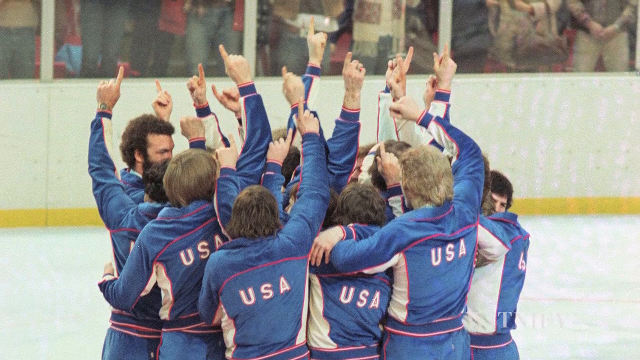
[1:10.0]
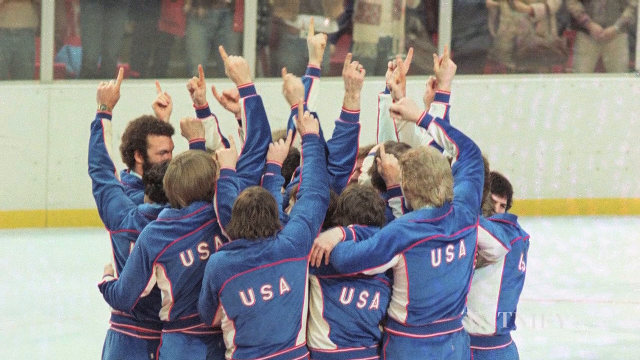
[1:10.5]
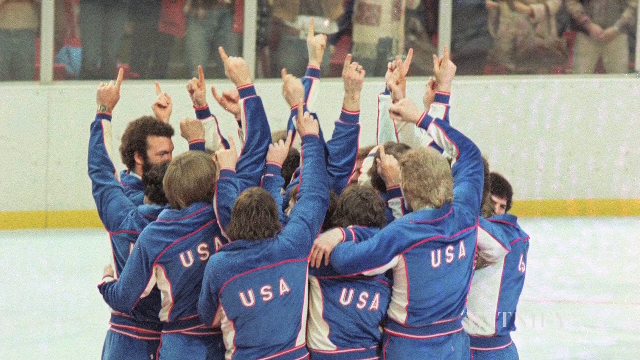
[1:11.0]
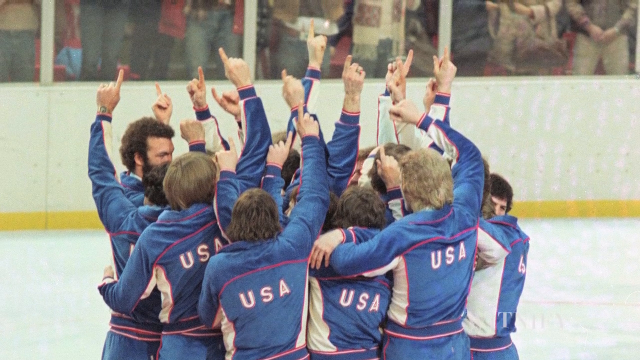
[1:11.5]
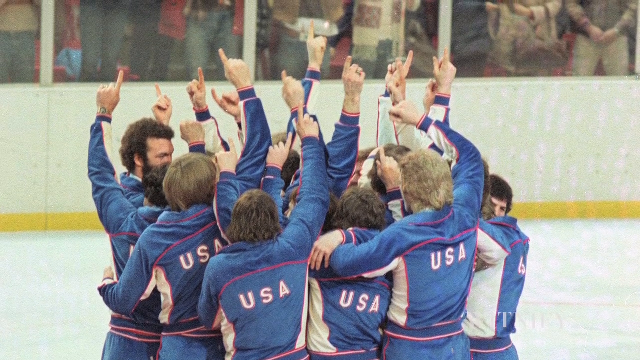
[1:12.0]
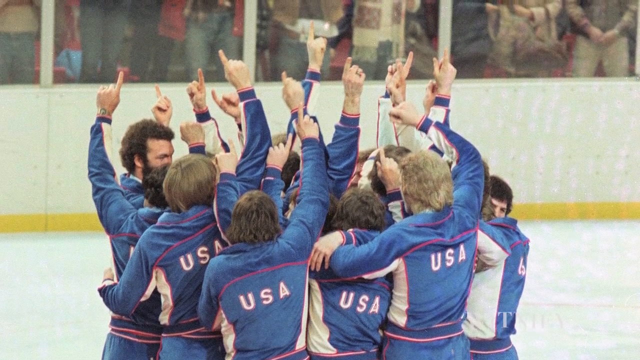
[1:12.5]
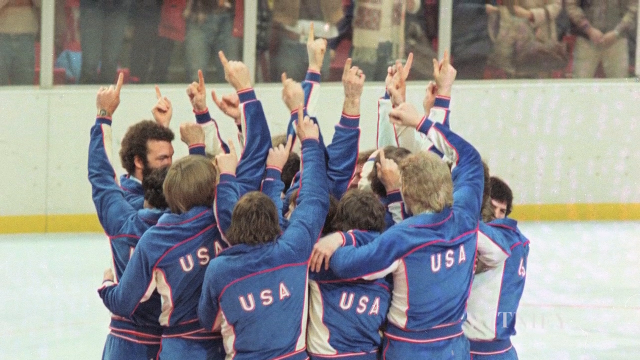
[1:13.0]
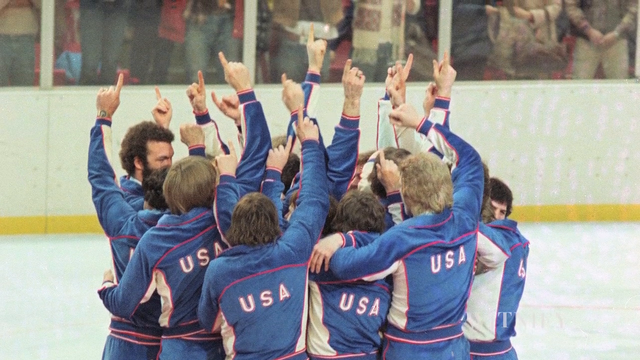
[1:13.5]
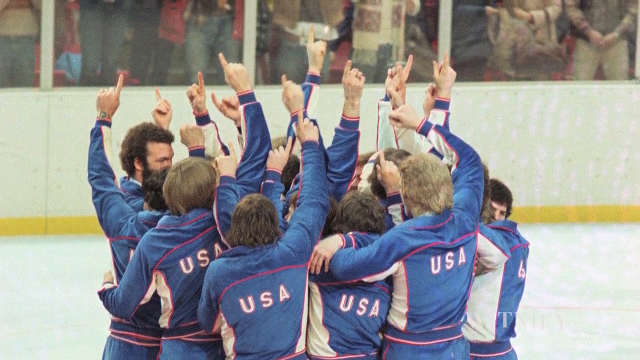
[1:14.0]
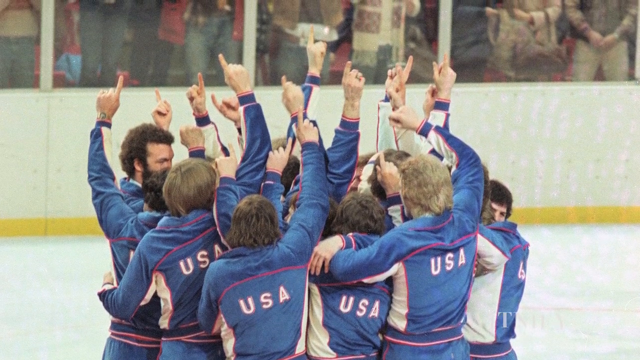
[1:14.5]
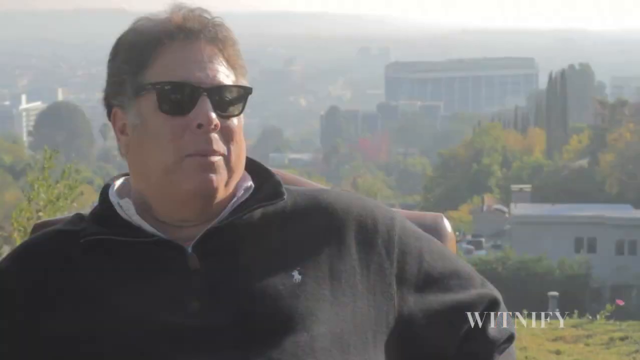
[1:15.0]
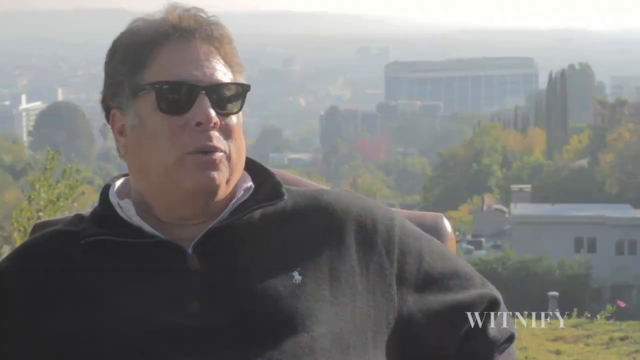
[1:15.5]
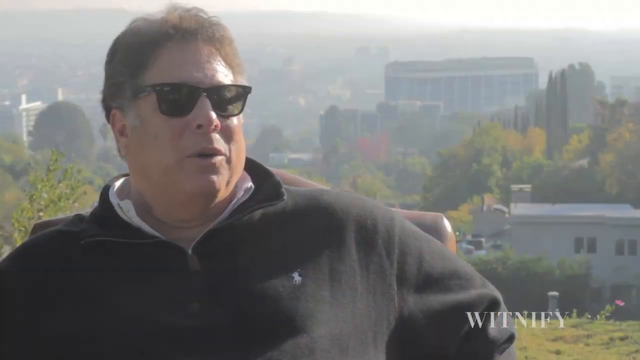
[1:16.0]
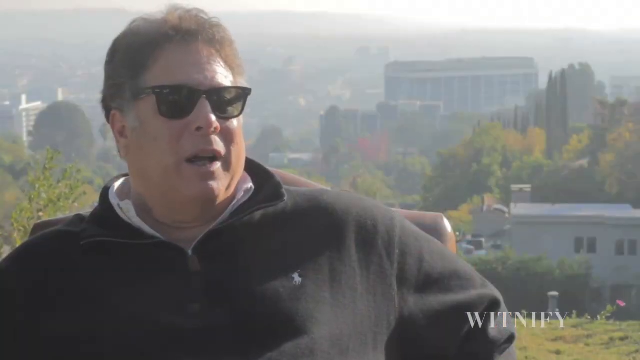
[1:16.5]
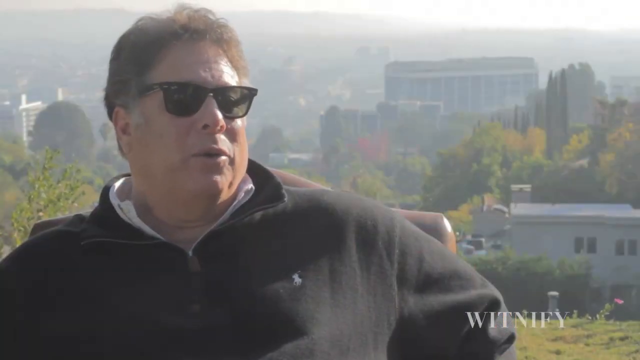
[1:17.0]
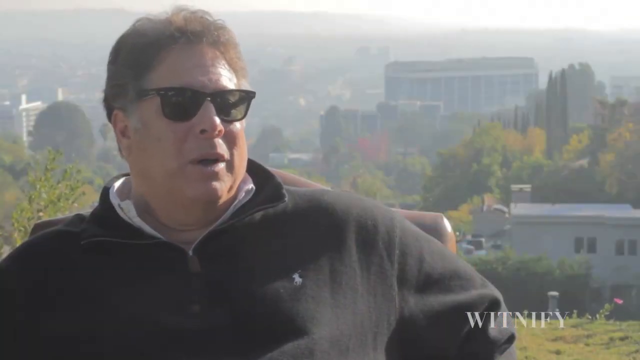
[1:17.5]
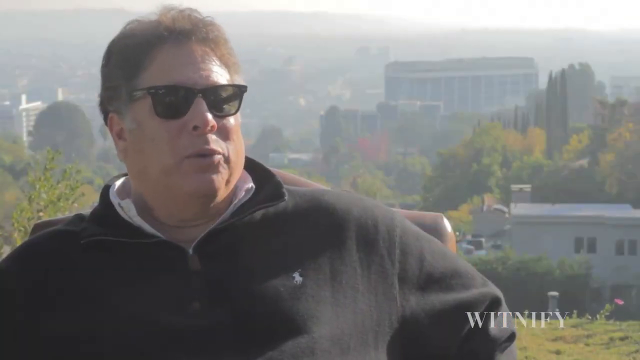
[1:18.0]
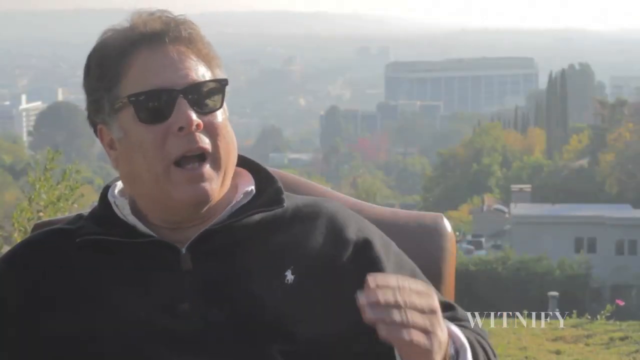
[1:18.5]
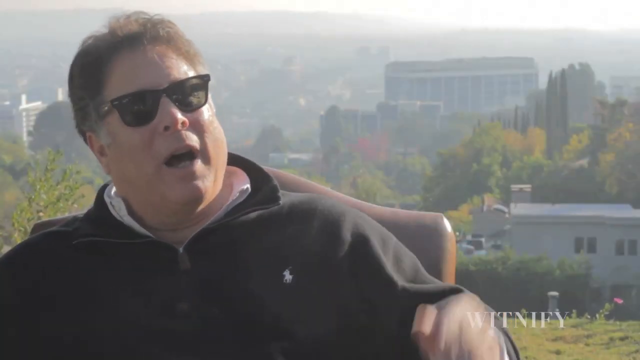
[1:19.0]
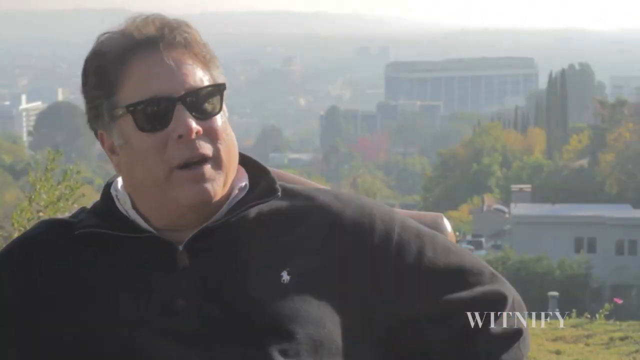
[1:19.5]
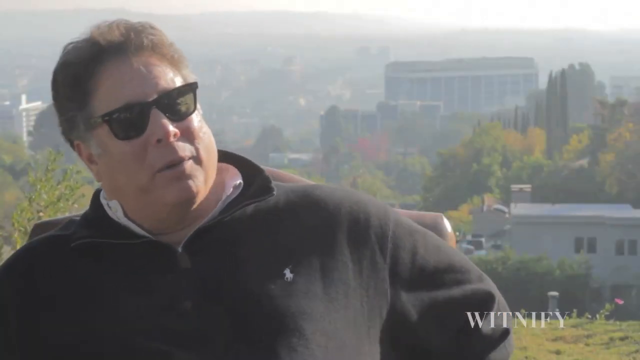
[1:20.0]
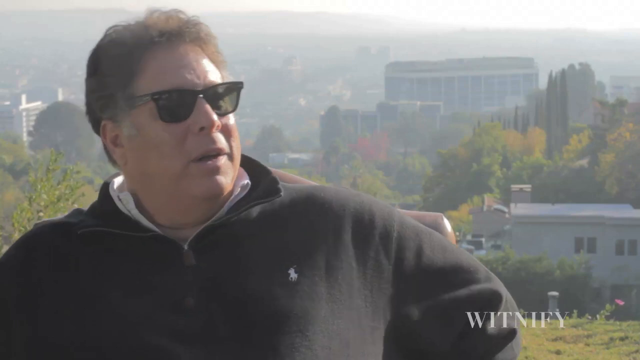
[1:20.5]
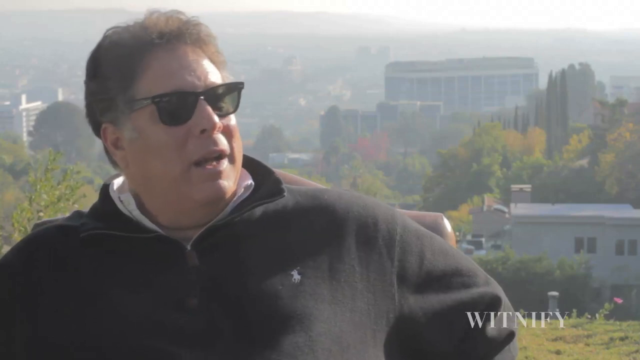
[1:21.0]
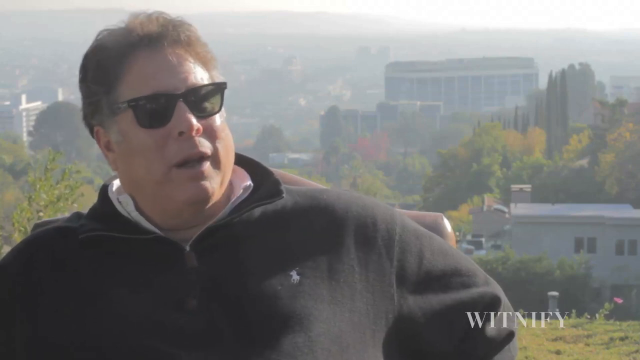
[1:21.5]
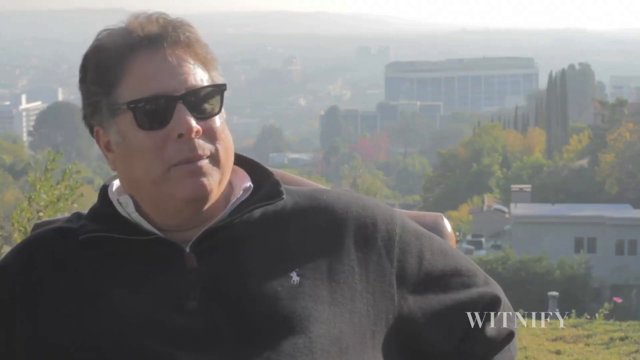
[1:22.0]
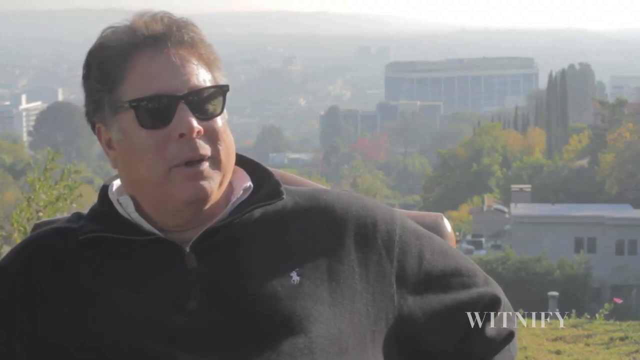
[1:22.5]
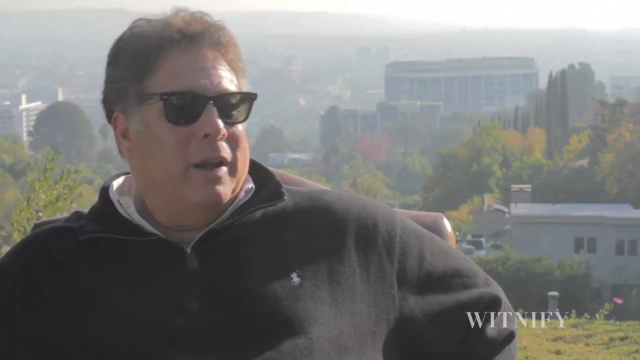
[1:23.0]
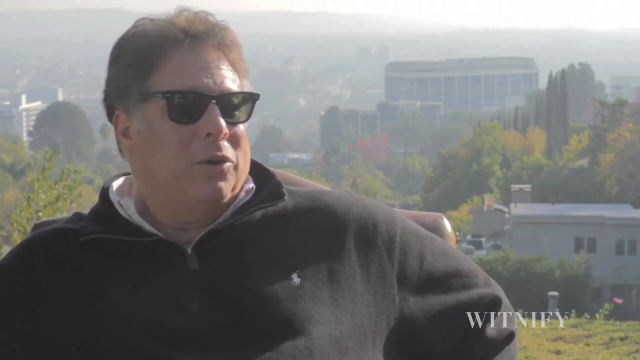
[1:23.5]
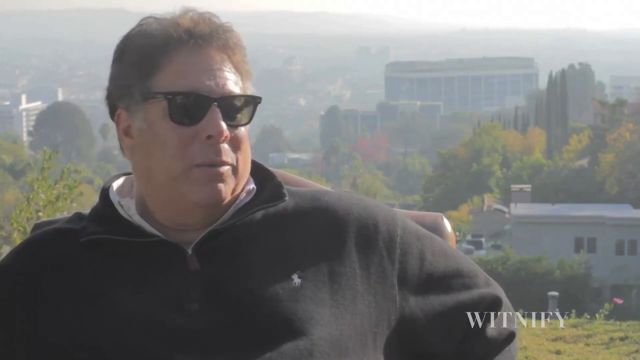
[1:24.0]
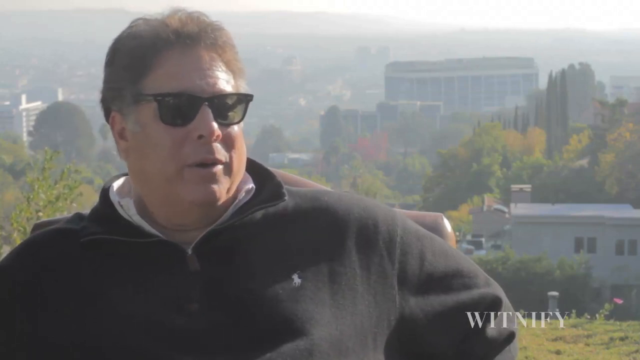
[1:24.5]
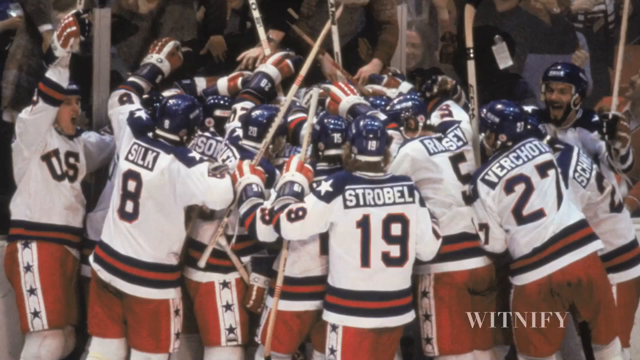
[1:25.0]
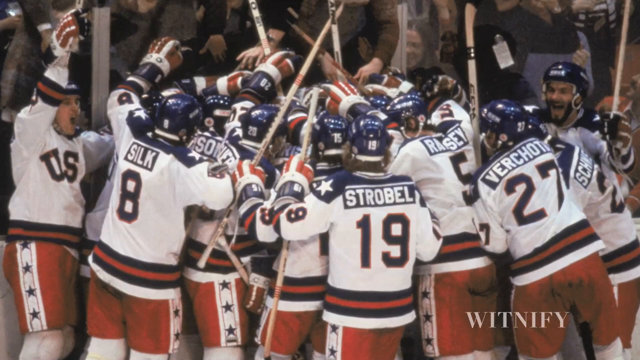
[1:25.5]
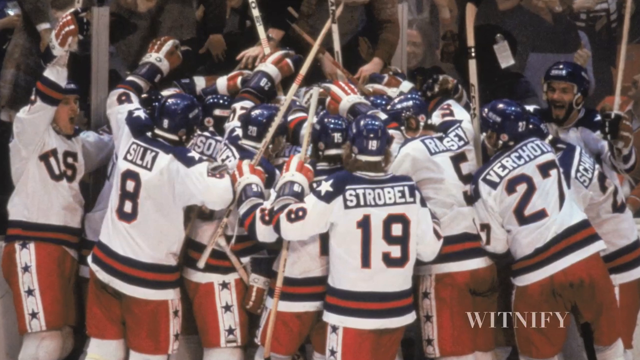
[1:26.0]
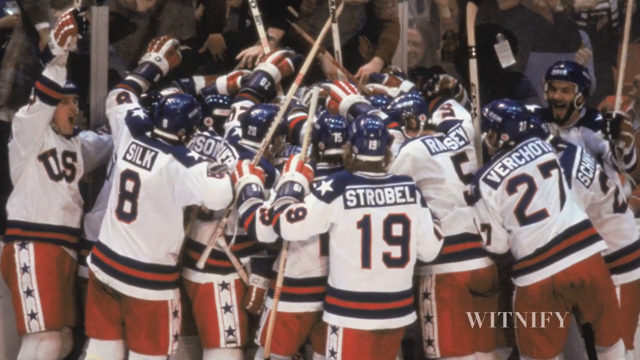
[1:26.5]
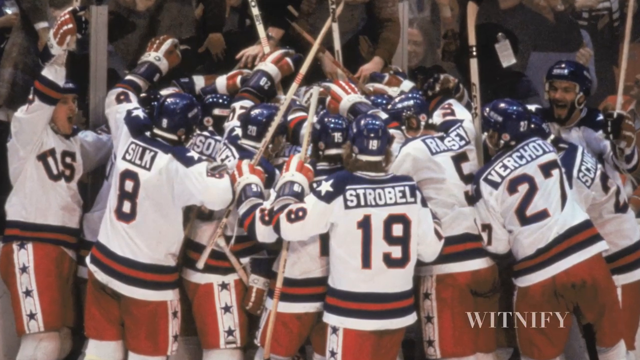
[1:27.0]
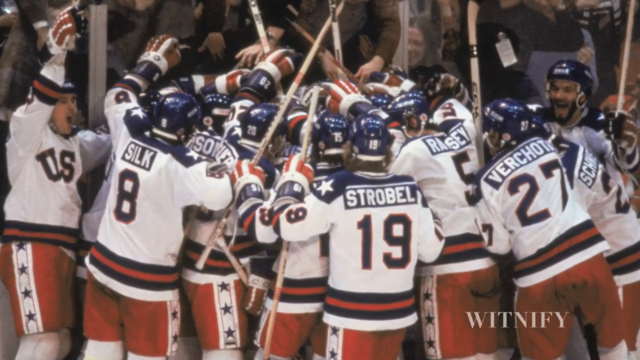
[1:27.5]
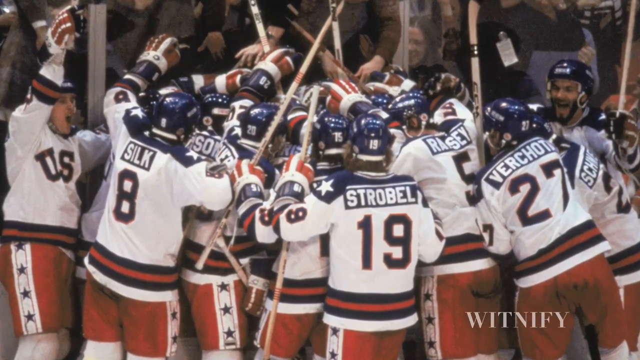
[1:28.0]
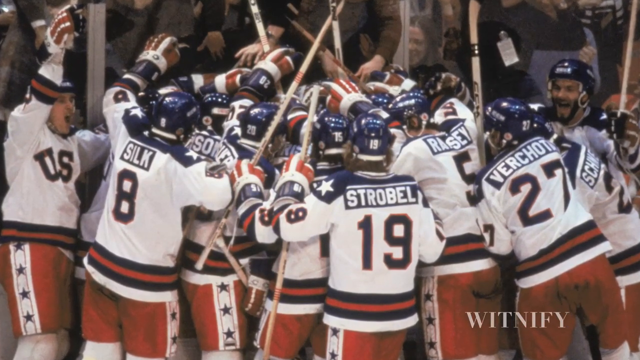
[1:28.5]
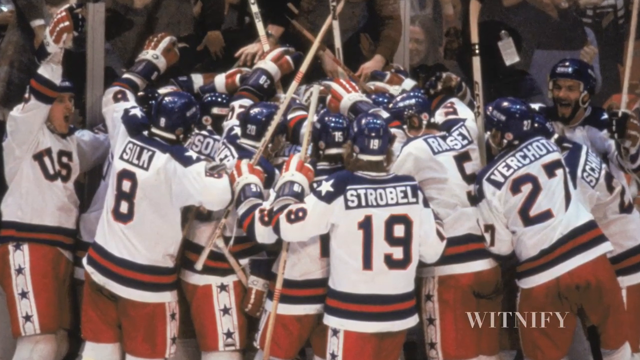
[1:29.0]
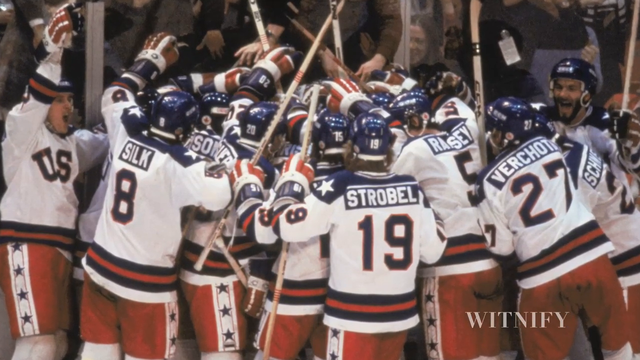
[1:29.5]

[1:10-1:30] The photo of the Team USA hockey team huddled at center ice, all in the same blue USA jackets with their index fingers pointed toward the sky, is on screen. David Israel continues speaking into the camera. He makes another point with a hand gesture, starts to lean back a little in his chair, and nods his head slightly to the left as he speaks. Another photo of Team USA hockey follows, with the players in white uniforms with a navy blue and red stripe at the bottom of the jersey and red hockey pants with stars down the side. Each player's name is on his jersey in white on a blue background. Everyone is huddled up in full uniform and seems to be celebrating and cheering, judging by their happy faces.